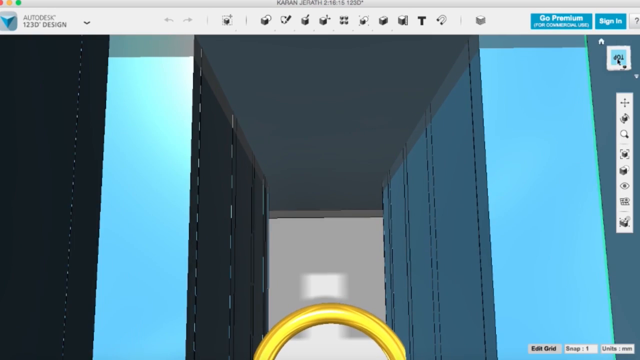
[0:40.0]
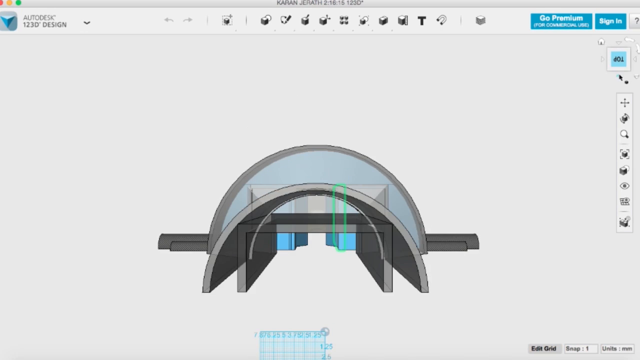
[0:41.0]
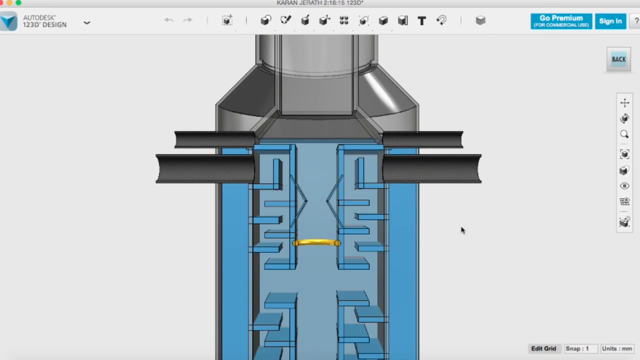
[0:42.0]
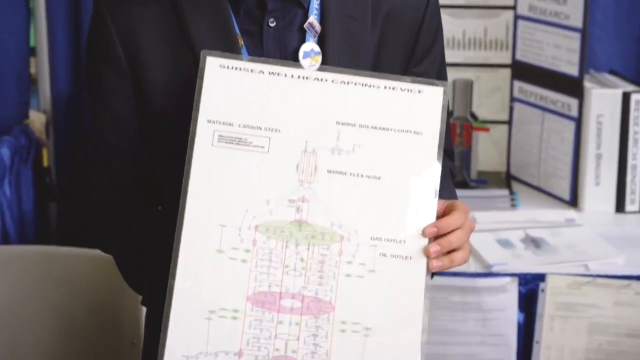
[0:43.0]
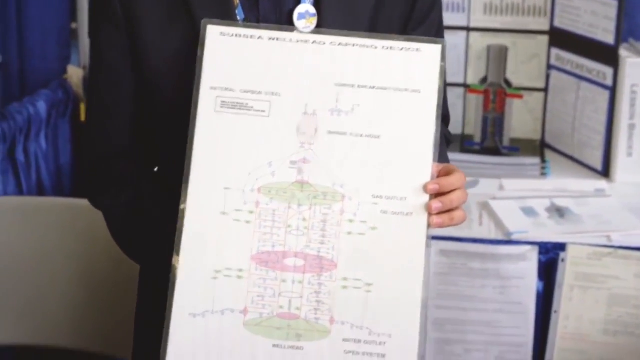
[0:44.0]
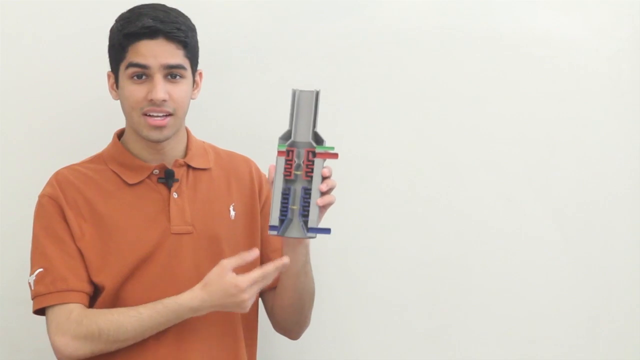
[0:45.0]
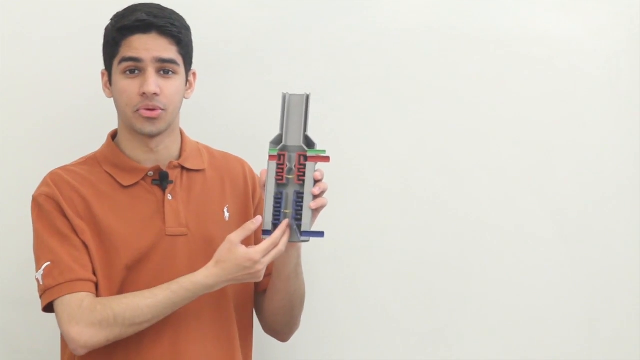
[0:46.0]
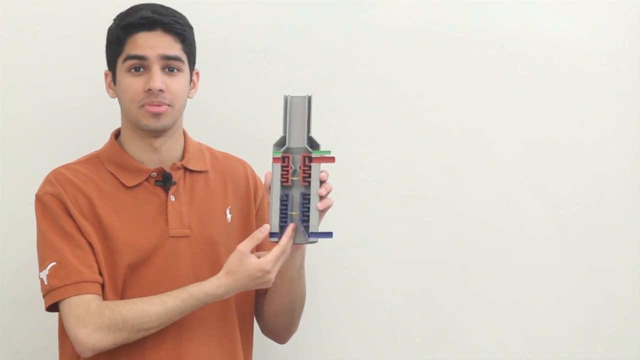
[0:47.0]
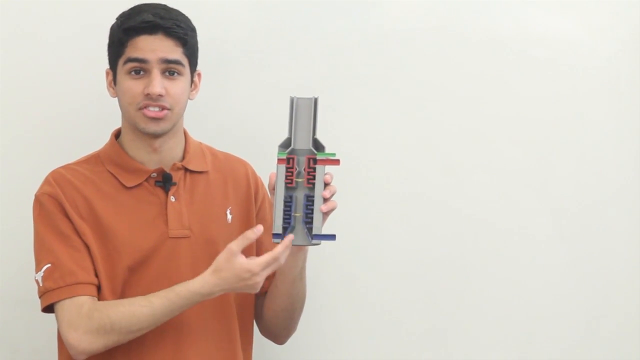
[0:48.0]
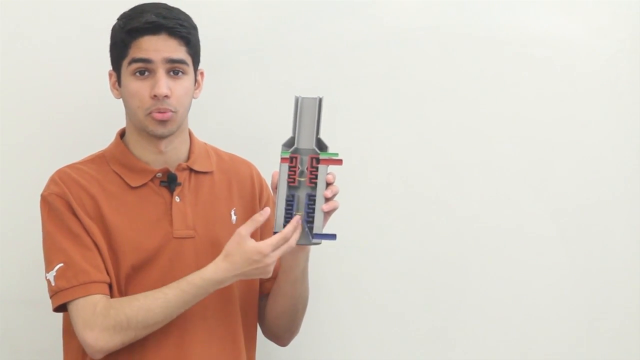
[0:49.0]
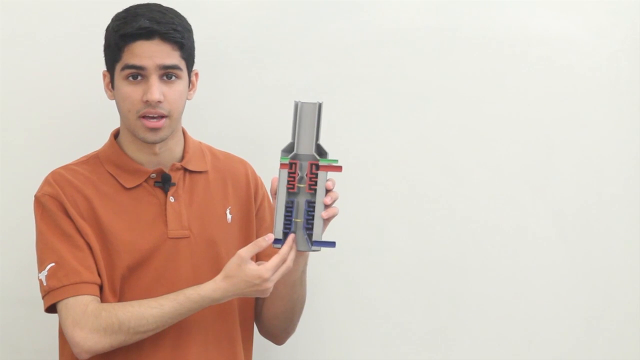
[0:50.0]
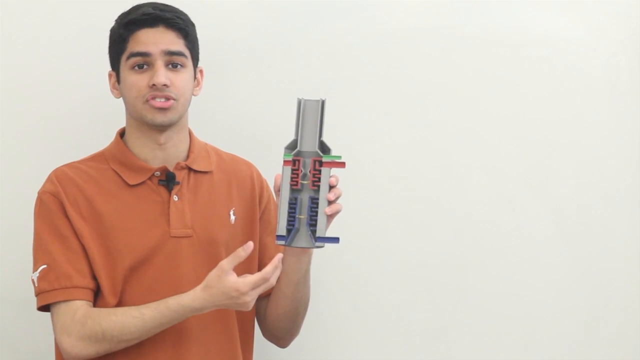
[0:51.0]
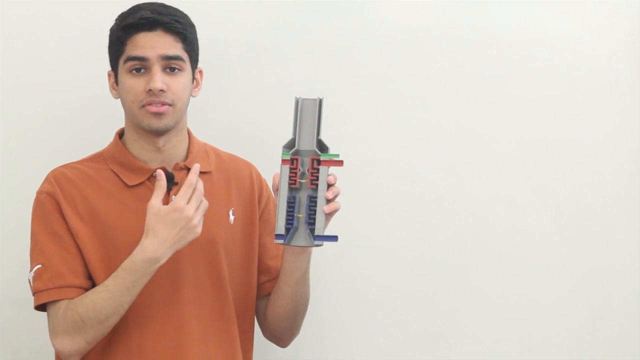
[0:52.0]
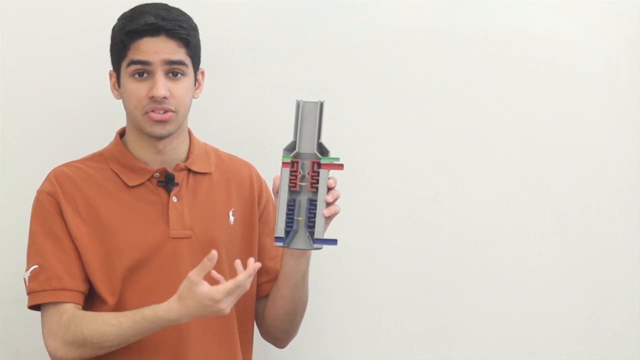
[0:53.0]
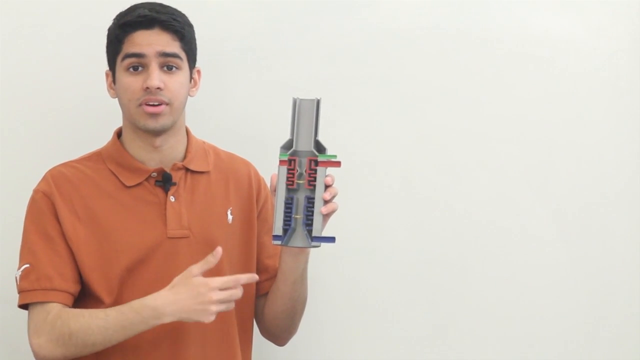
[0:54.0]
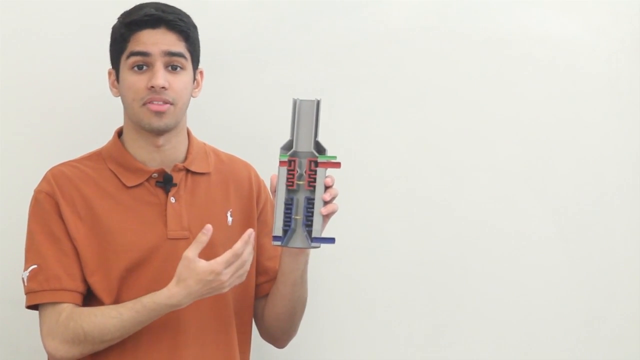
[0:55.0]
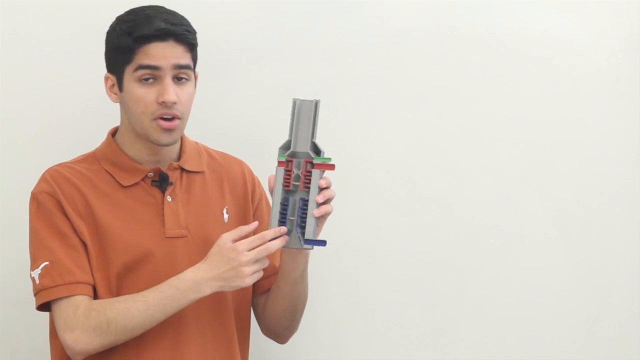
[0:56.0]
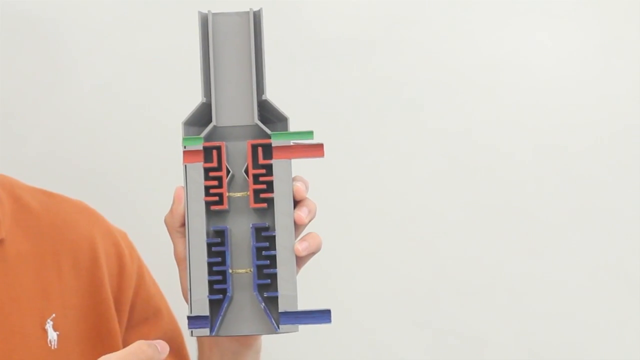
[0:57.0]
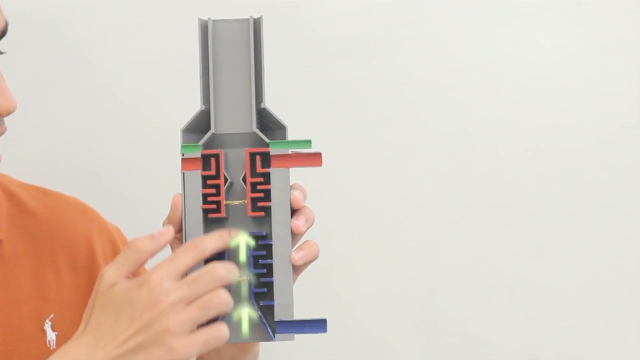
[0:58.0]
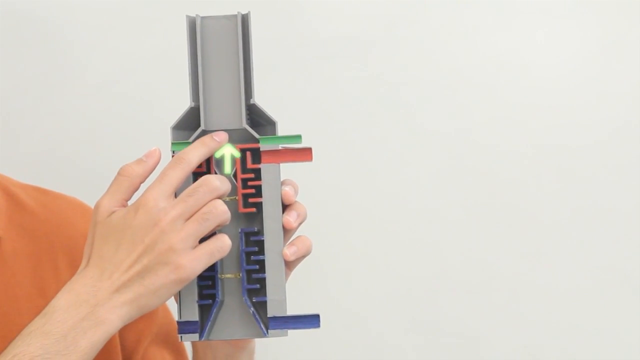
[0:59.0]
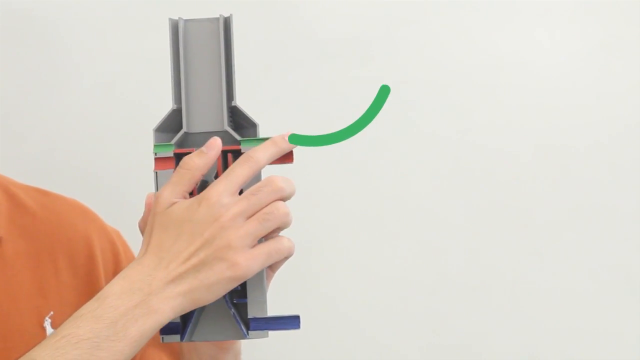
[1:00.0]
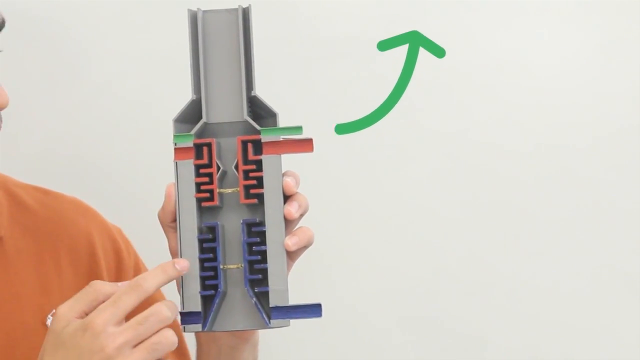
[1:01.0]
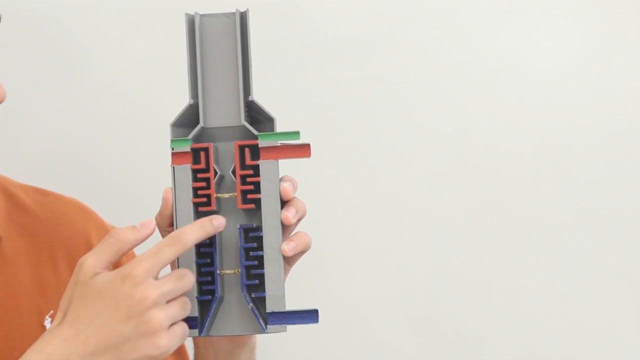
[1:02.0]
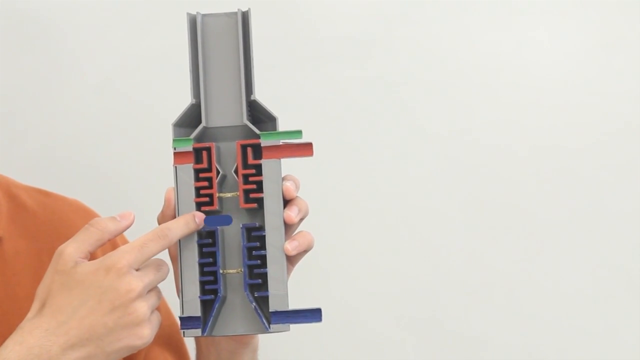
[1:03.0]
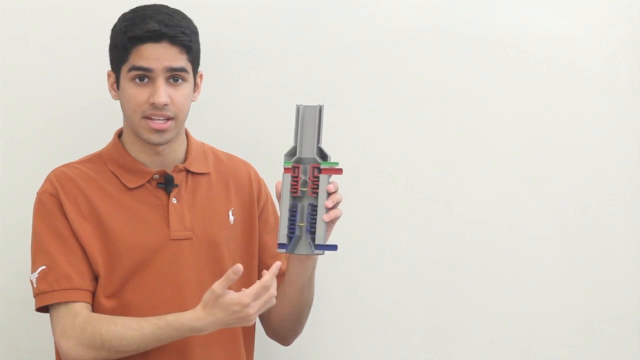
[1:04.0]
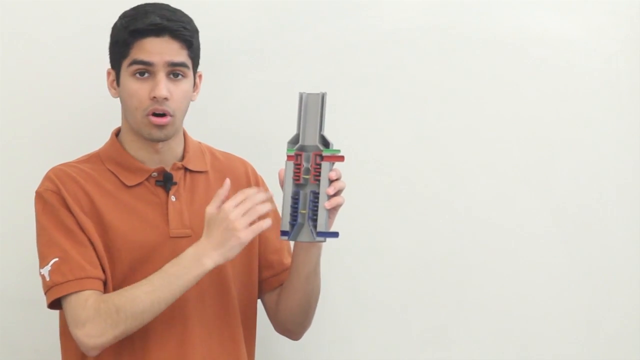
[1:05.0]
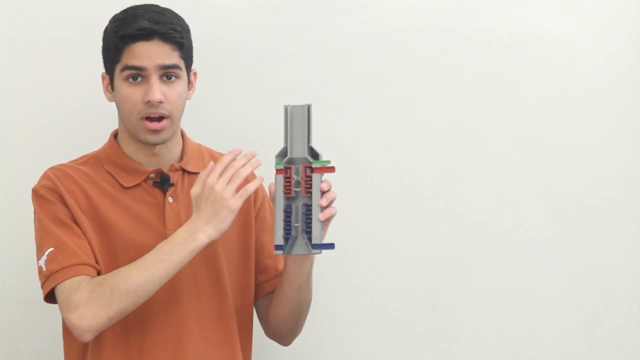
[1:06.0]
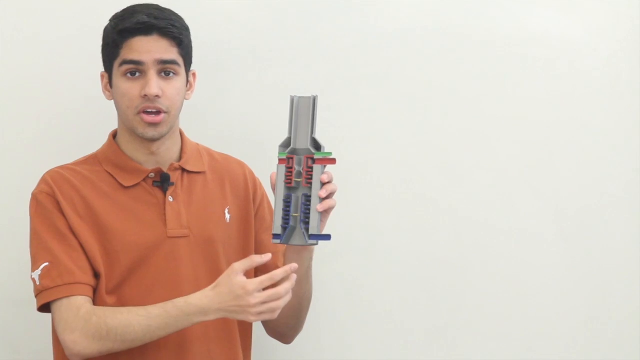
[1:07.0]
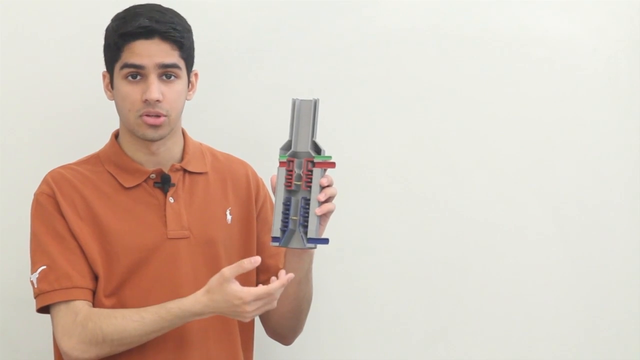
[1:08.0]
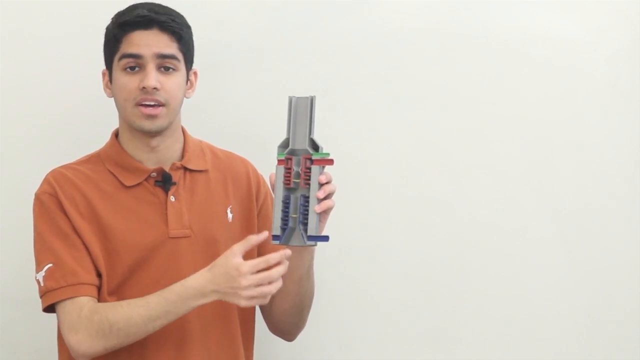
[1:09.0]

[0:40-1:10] The inventor shows how the BP device operates and how it goes up, with the inside of the device visible. There is something like a map or chart showing how the device is designed, and notes show the formula for how it is formed, explained from the bottom up. The inventor looks young, apparently around his 20s, and is calm and cool.